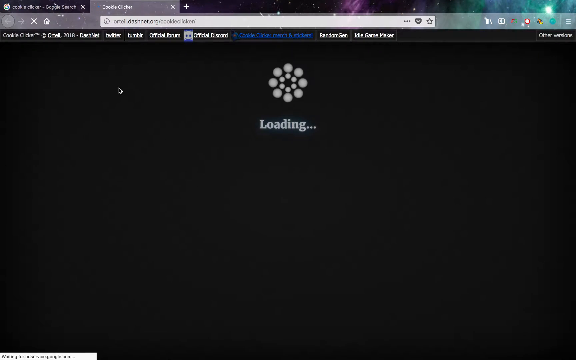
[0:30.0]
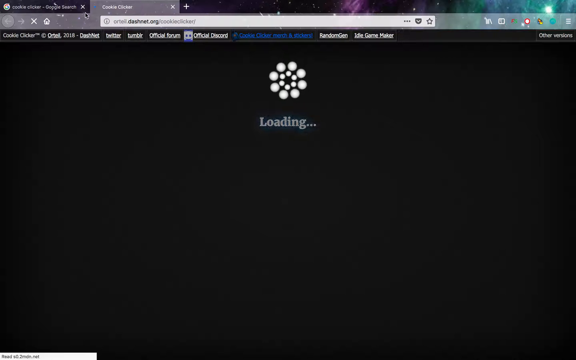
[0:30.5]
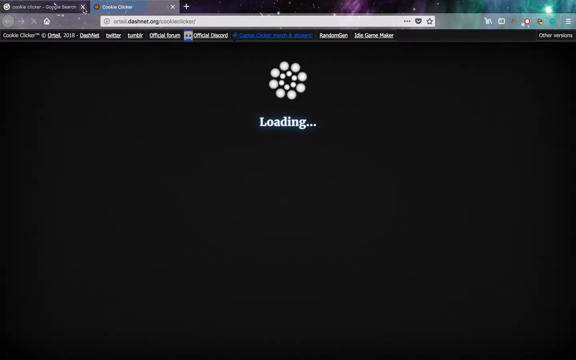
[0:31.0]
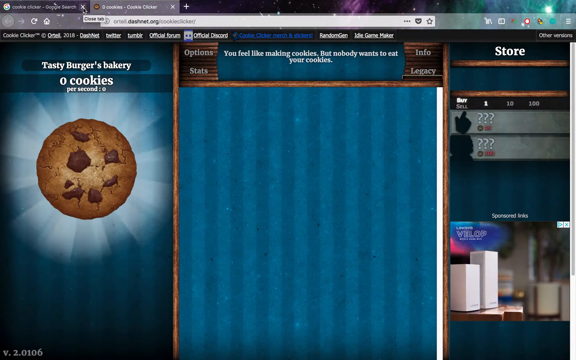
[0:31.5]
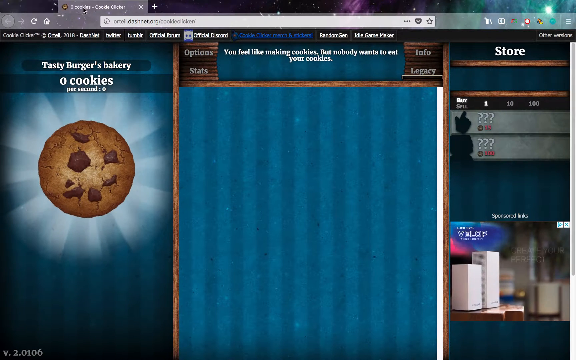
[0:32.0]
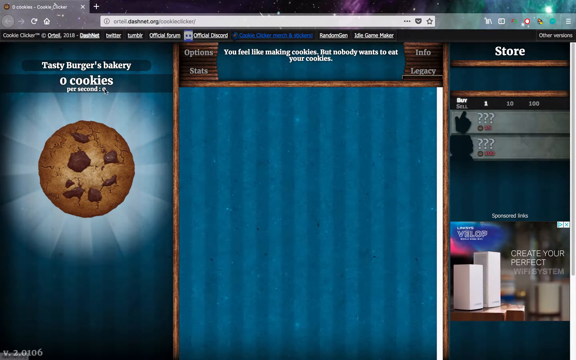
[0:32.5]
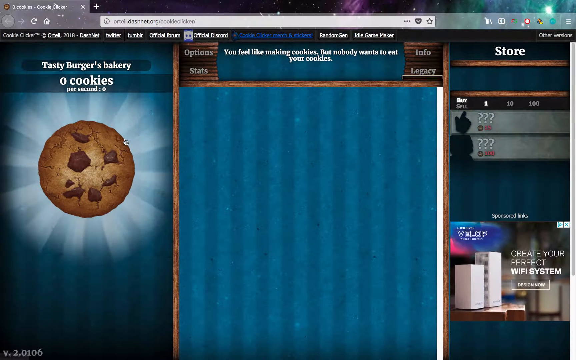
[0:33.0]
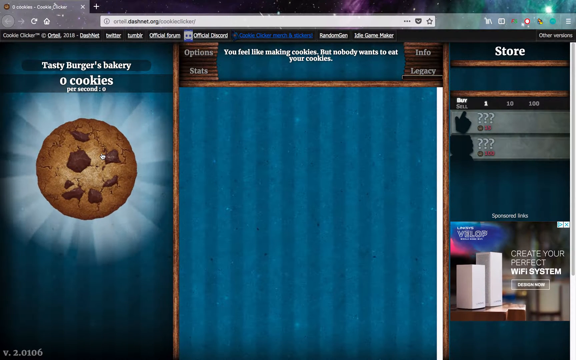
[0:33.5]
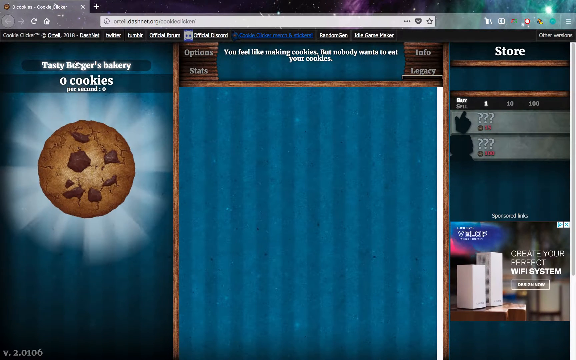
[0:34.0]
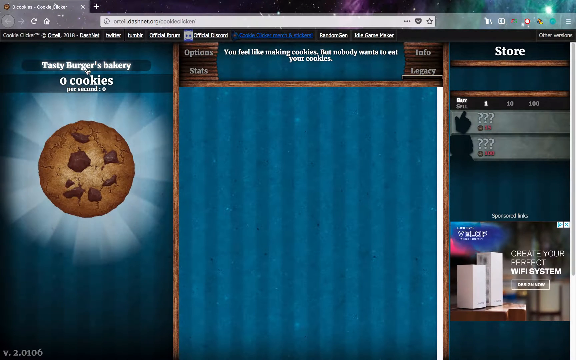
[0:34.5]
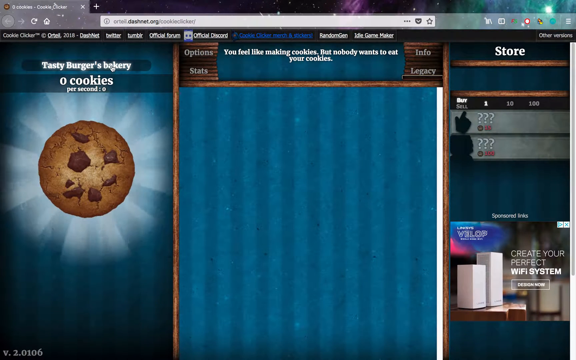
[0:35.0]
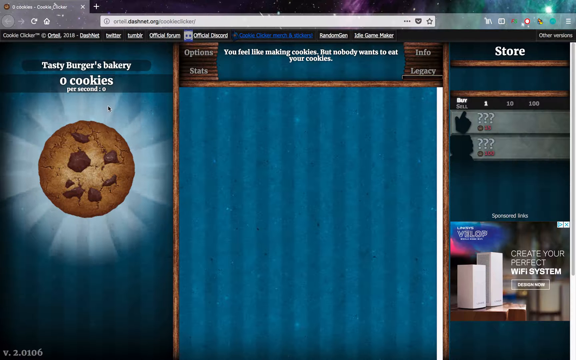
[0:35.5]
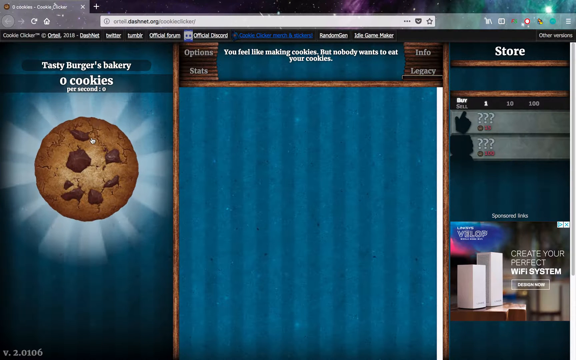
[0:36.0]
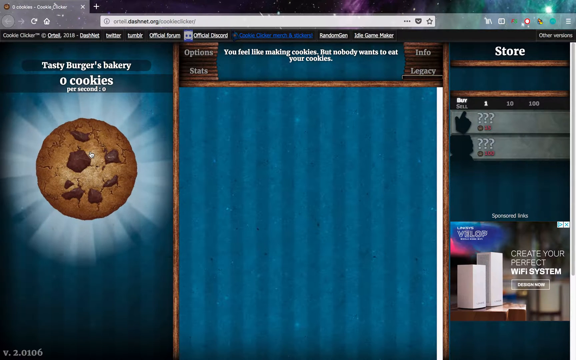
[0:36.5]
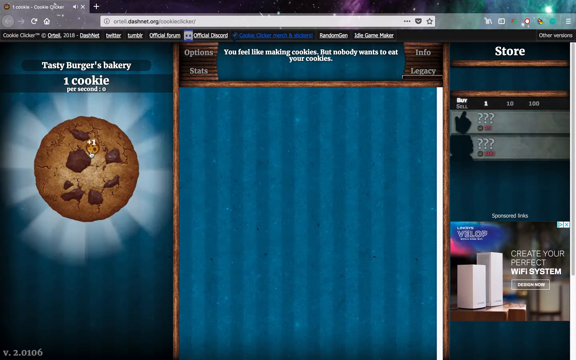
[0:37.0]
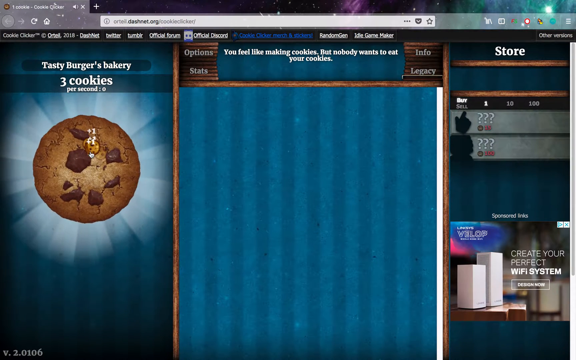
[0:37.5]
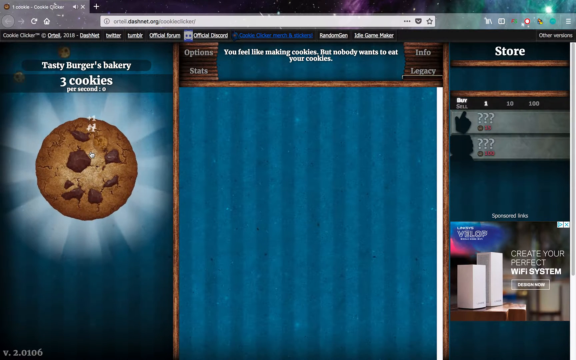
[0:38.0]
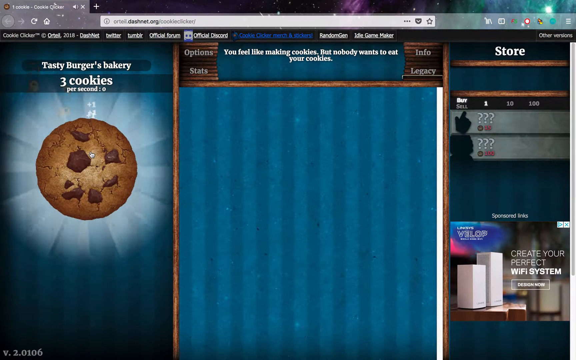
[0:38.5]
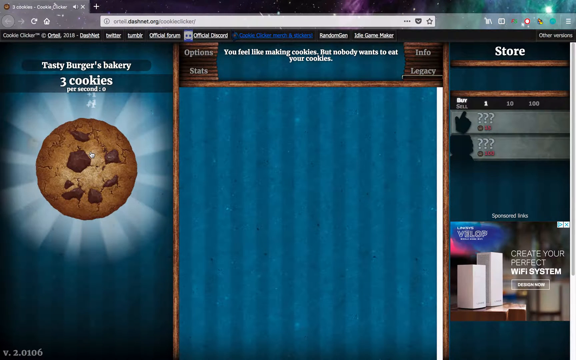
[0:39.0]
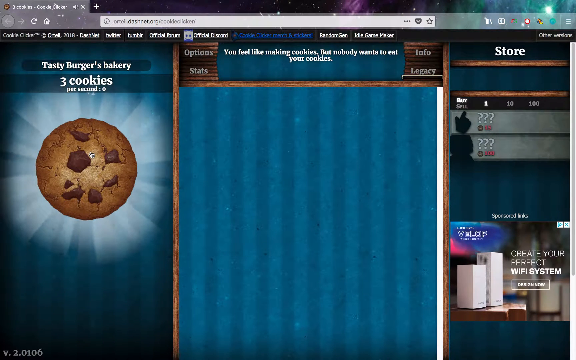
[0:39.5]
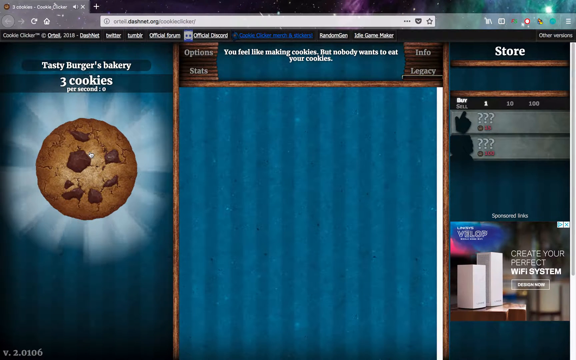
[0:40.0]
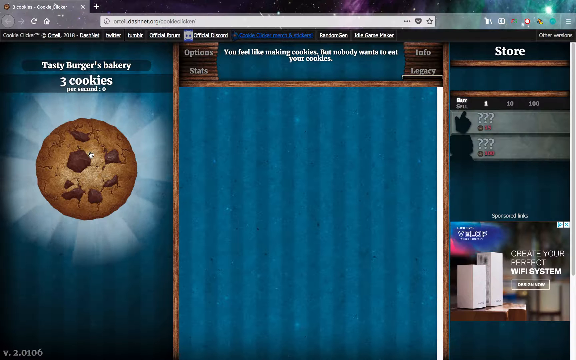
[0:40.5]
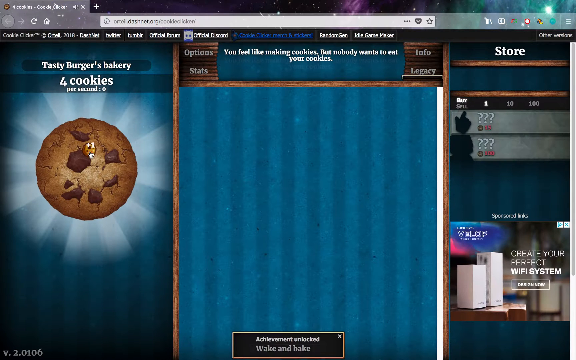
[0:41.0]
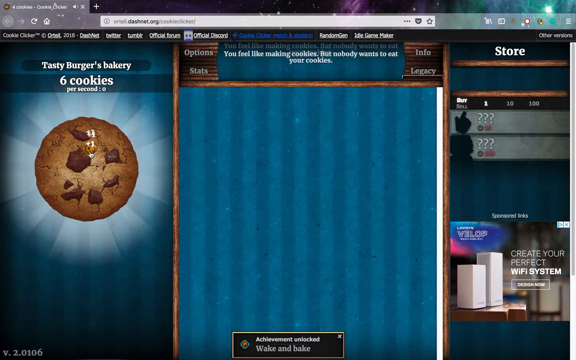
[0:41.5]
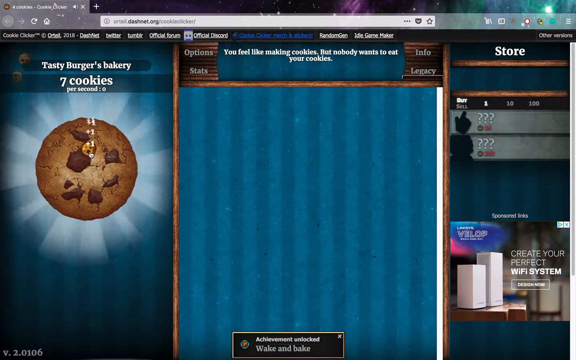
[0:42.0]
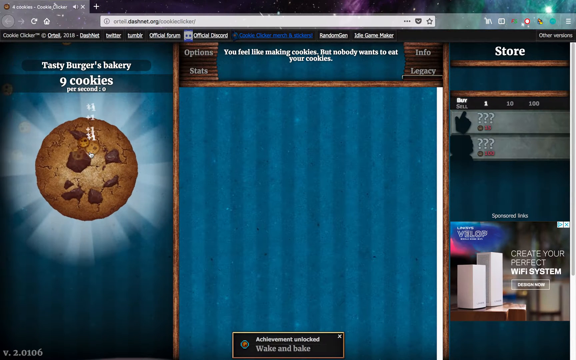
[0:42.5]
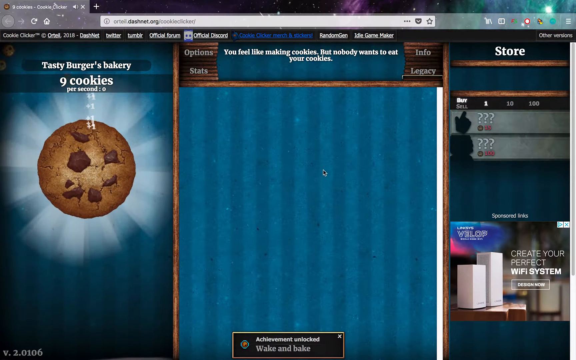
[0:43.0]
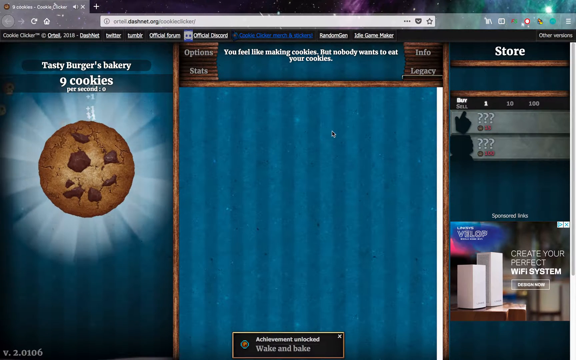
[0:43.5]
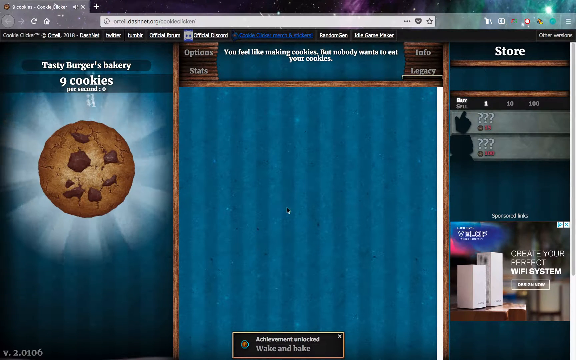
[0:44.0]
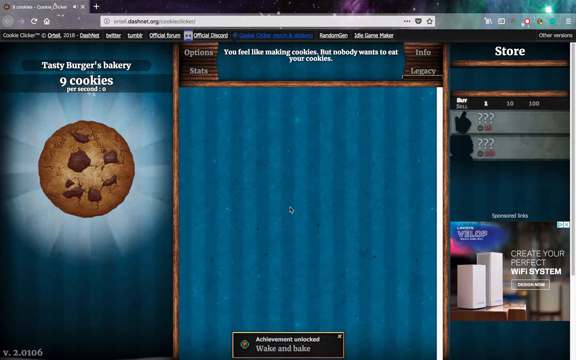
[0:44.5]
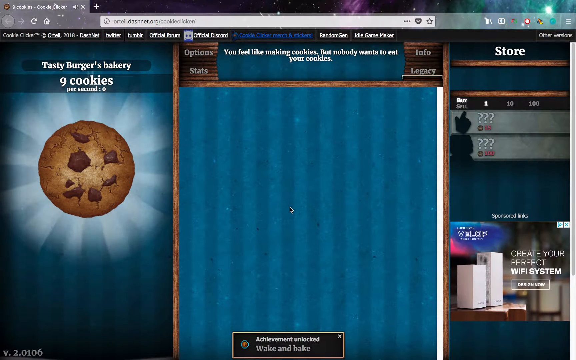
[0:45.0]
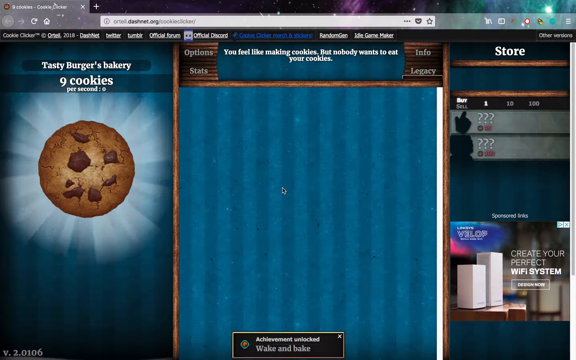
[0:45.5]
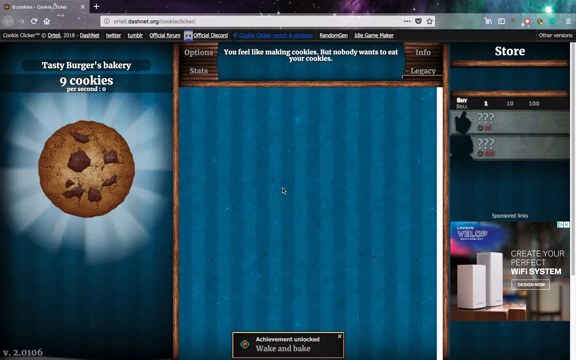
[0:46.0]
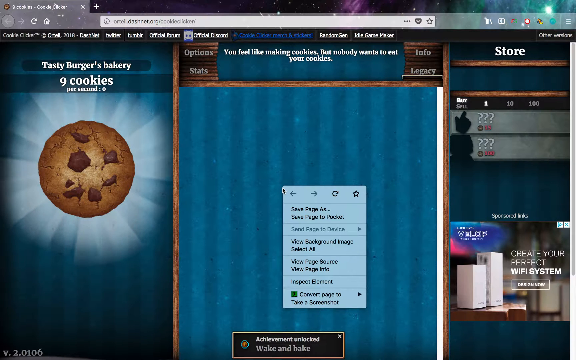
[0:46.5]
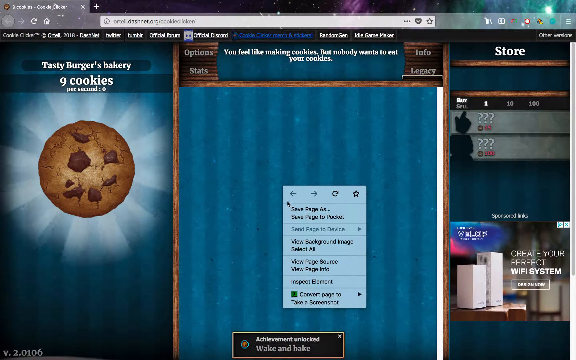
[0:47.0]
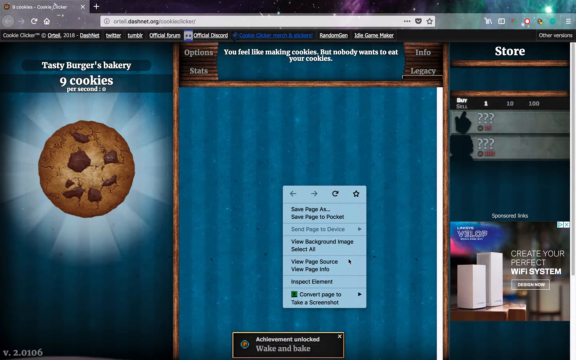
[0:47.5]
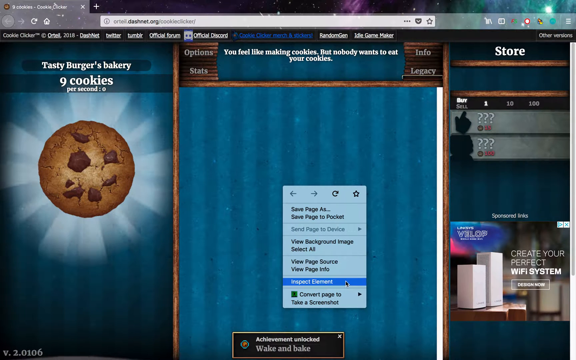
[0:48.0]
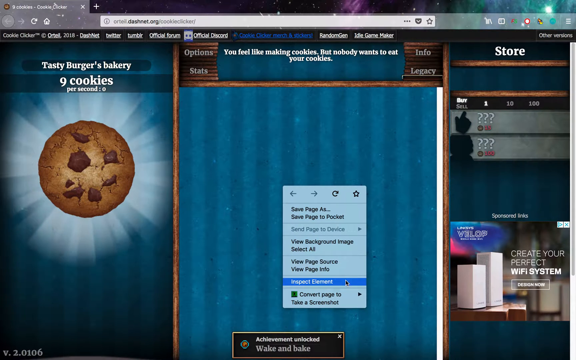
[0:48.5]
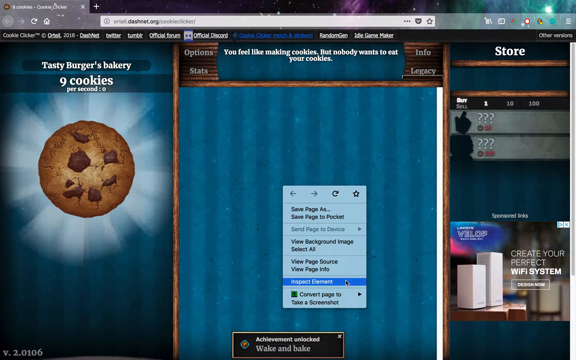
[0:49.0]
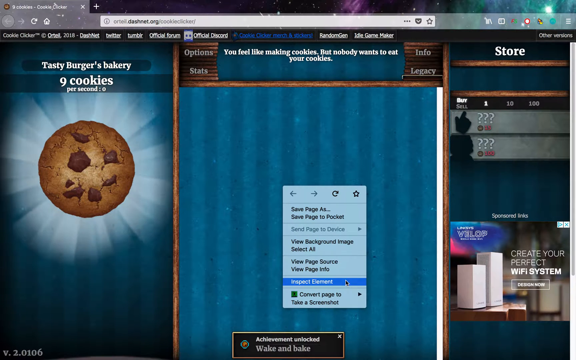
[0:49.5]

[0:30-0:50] A black screen says "Loading" and shows loading symbols. As the website populates, "Tasty Burgers Bakery" appears on a bakery website. A cookie is at the very far left; it seems to be a game in which each click on the cookie earns one point. The cursor goes to the middle of the screen and right-clicks, then moves all the way down and highlights the final option in the drop-down menu. On the far right side is the store for the game, with a sponsored links ad at the very bottom that says "Create your perfect Wi-Fi system," an ad for Wi-Fi routers.